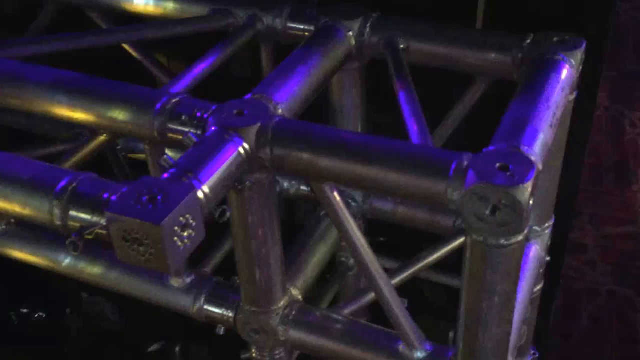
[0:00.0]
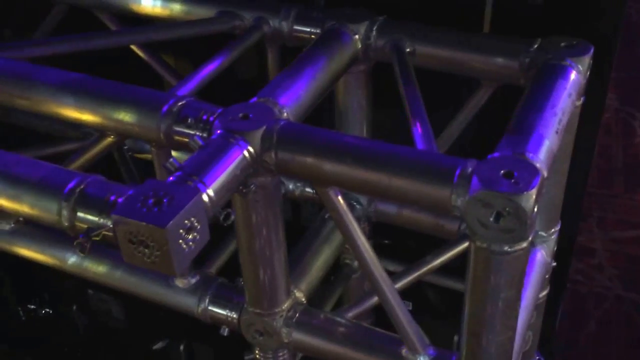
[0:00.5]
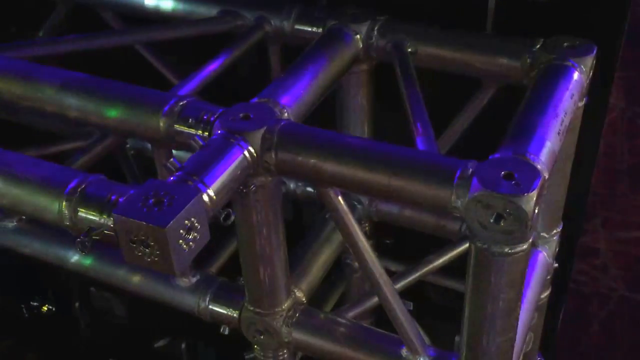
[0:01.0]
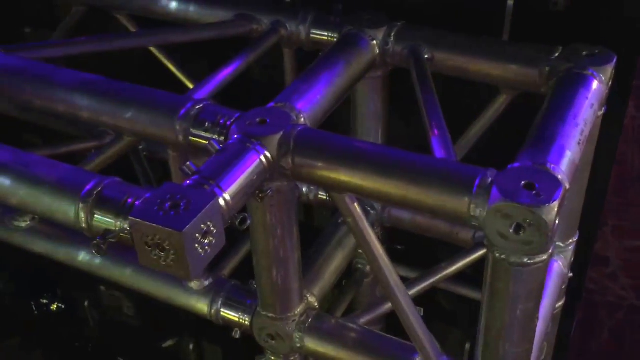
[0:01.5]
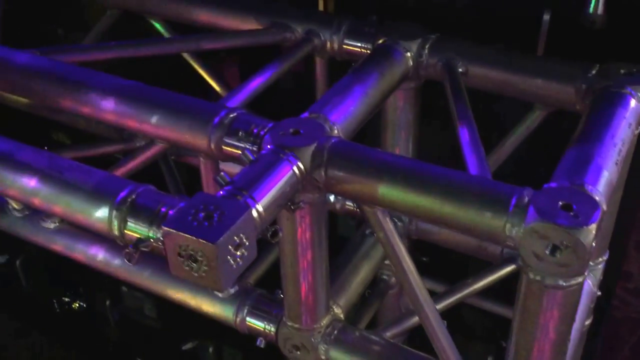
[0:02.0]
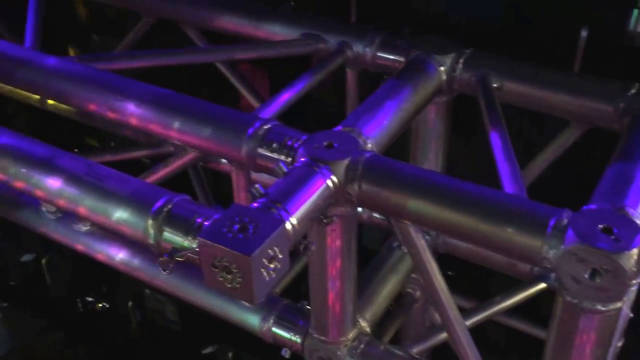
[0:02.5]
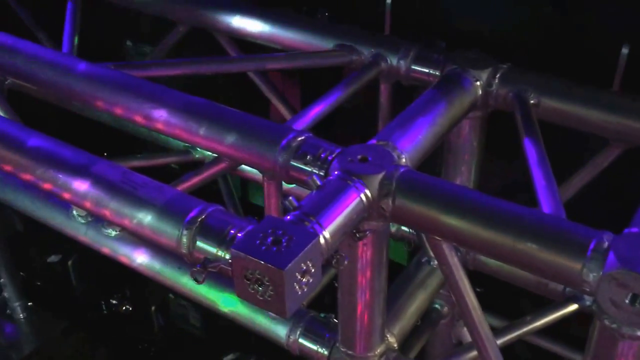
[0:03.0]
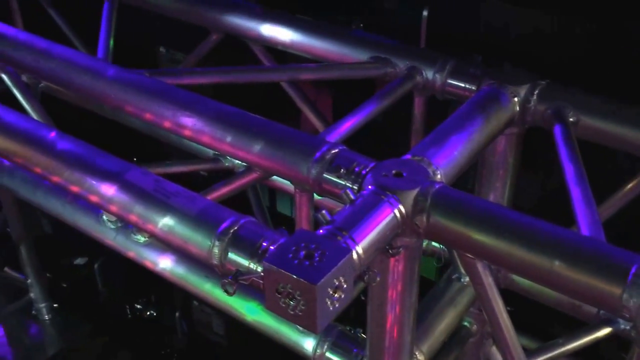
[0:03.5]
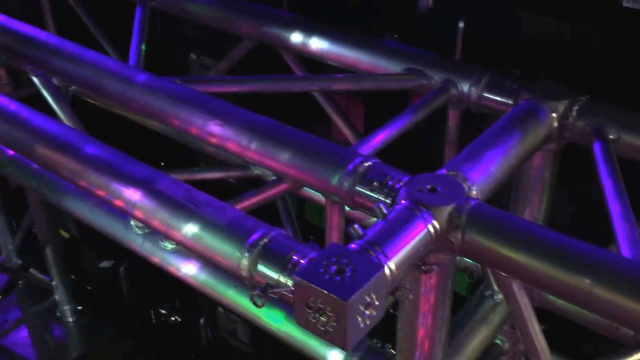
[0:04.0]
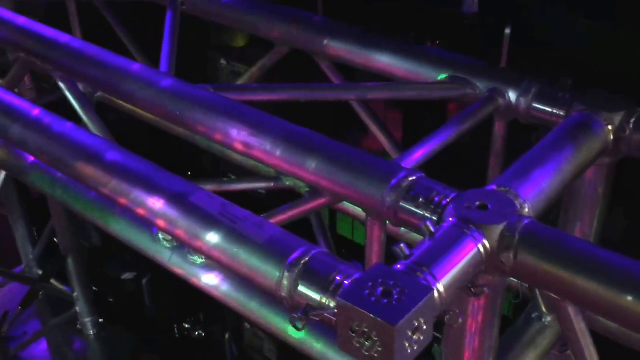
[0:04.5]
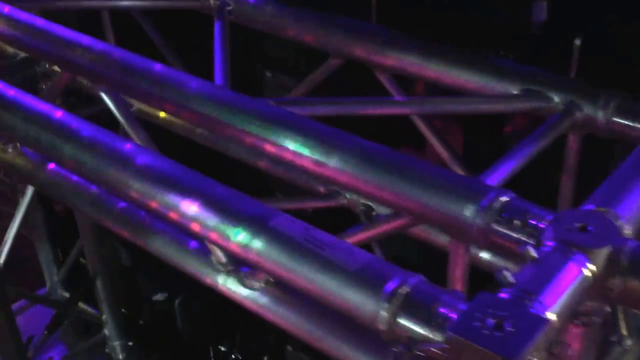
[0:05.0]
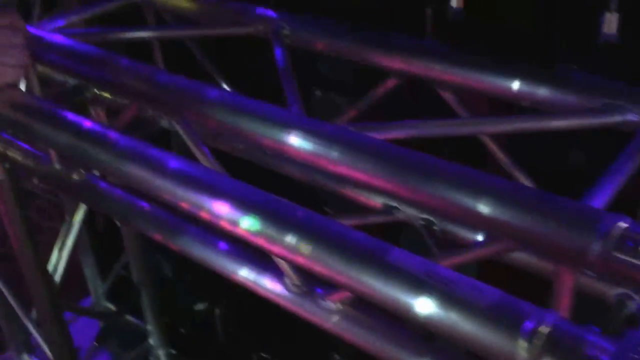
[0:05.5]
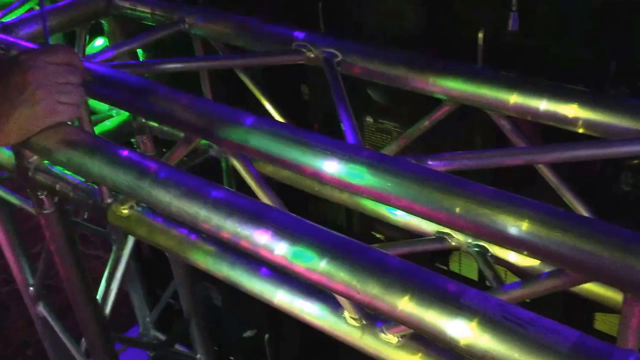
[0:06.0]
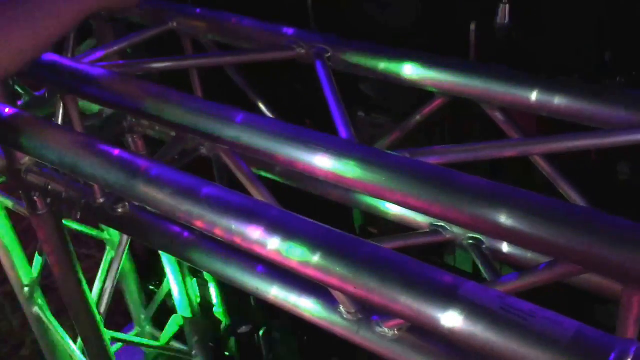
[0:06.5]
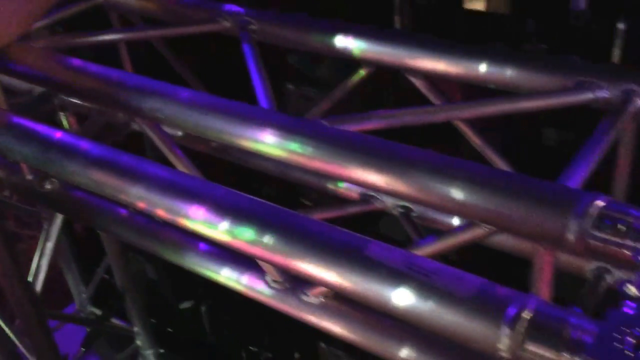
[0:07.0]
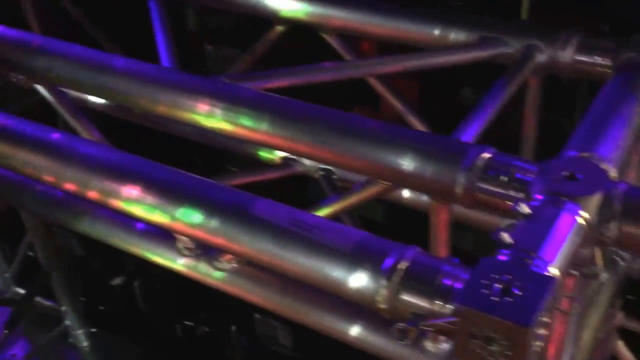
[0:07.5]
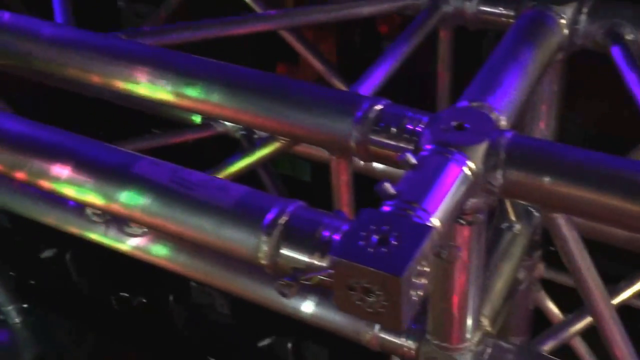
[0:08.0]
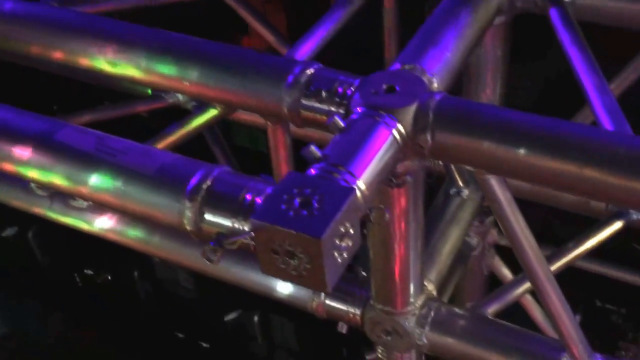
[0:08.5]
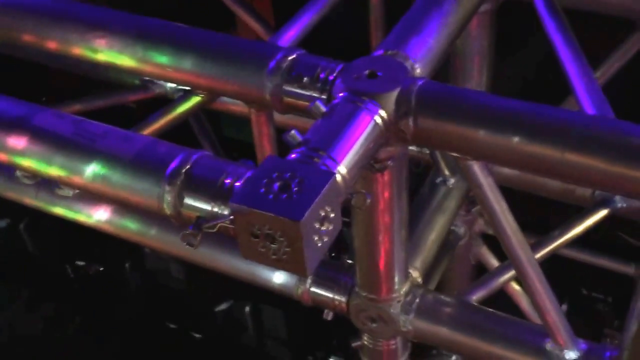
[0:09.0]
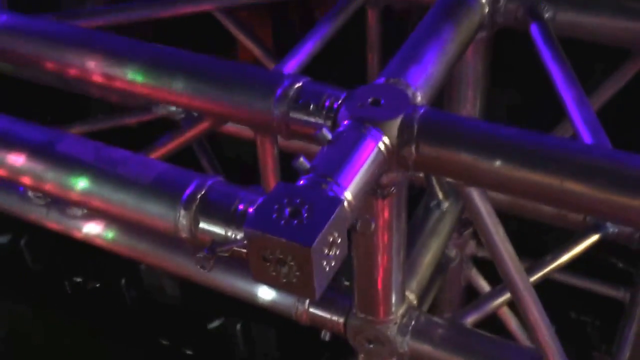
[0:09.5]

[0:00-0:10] A close-up shows what appears to be infrastructure rather than a product: a metal frame that looks like the lattice-style metal framing seen on stages, such as at the top of a concert stage. It is a square frame with other pieces of metal going in each direction that act as reinforcement. Someone's hand is visible, as if the person is standing there, but the person themselves is not seen. The camera pans down the frame for a few seconds and then comes back, showing only a small part of the metal item, which may be the type of frame used on a stage. It is lit in concert lighting, with purple and yellow lights strobing across it.